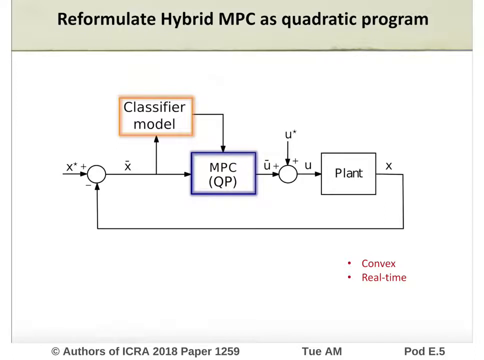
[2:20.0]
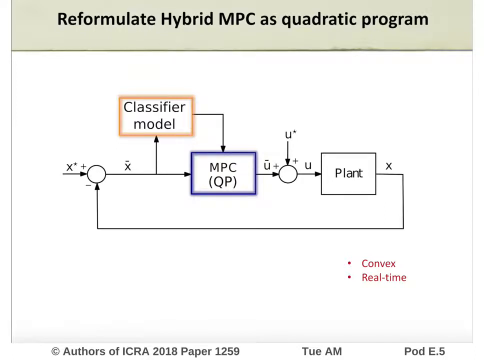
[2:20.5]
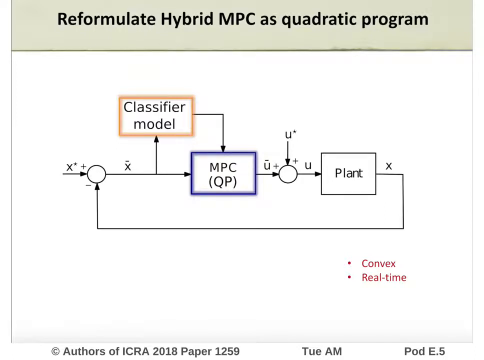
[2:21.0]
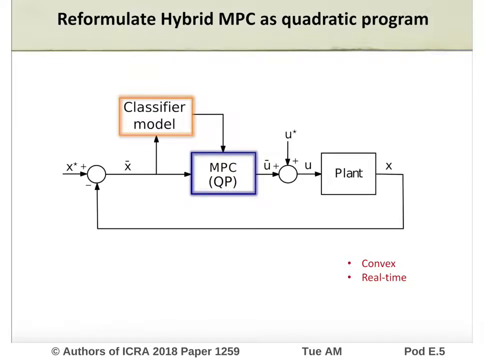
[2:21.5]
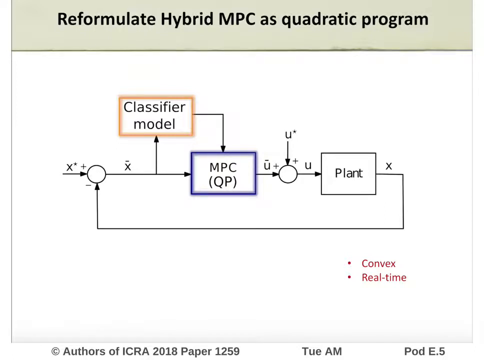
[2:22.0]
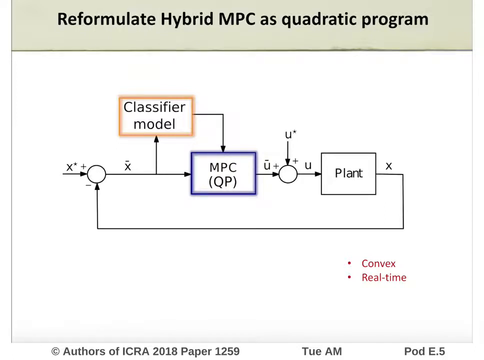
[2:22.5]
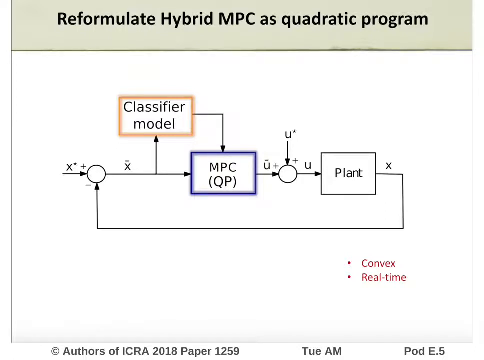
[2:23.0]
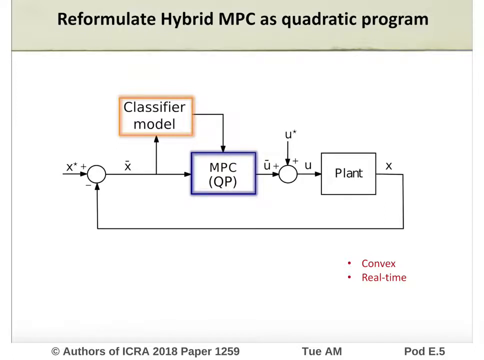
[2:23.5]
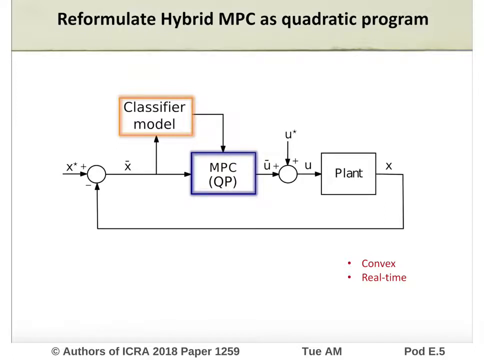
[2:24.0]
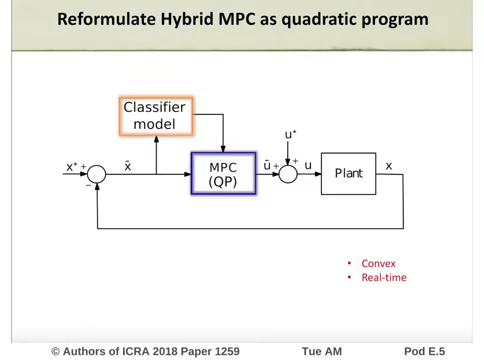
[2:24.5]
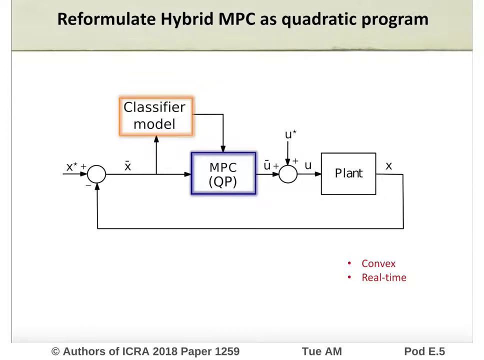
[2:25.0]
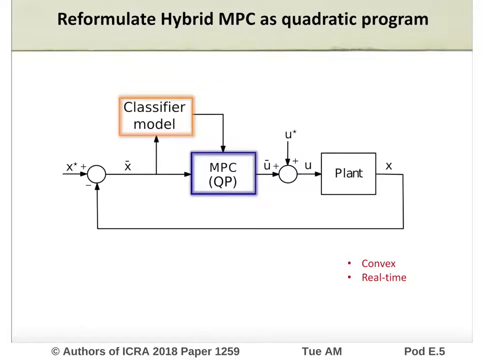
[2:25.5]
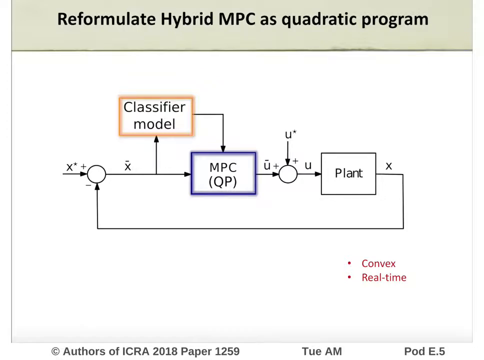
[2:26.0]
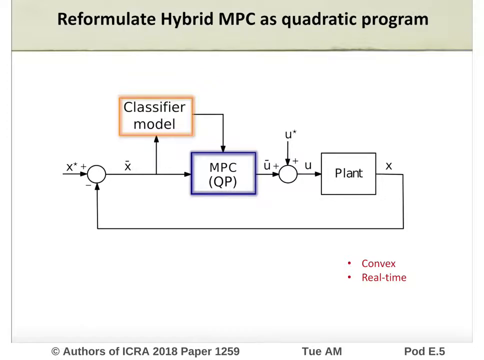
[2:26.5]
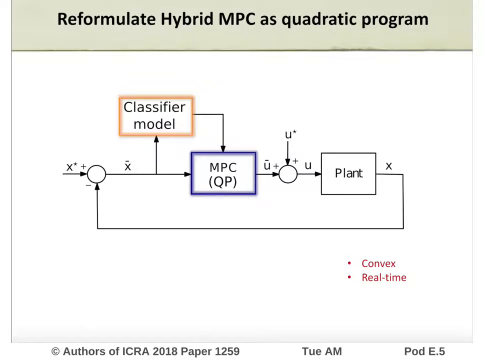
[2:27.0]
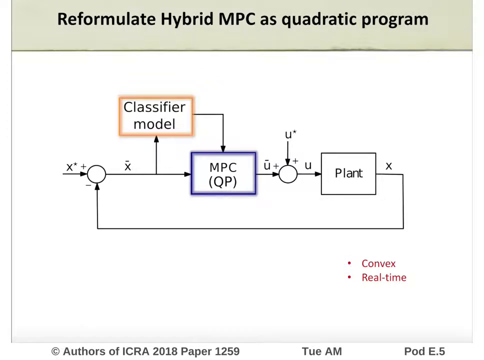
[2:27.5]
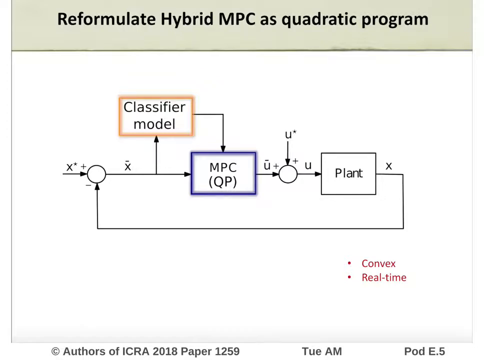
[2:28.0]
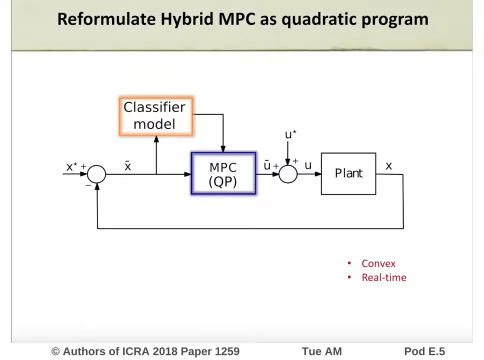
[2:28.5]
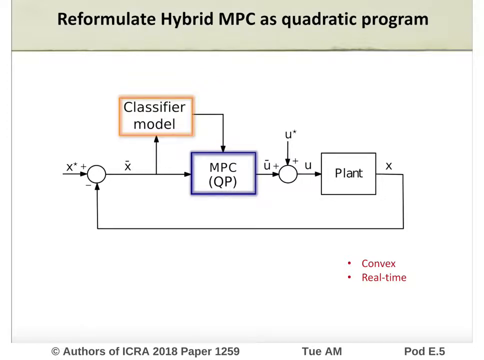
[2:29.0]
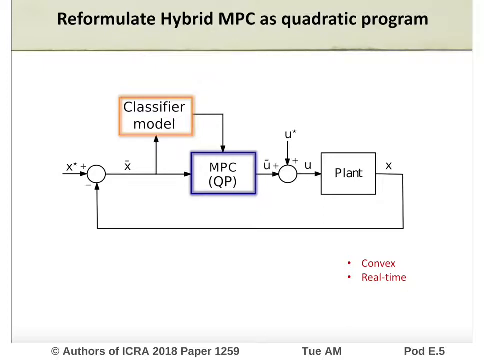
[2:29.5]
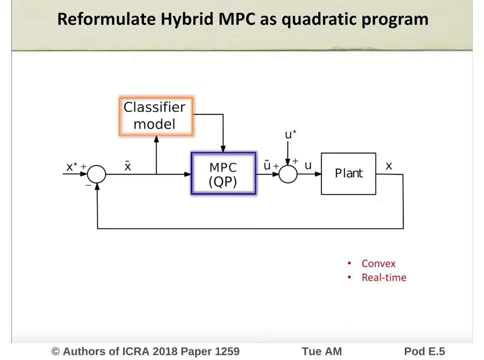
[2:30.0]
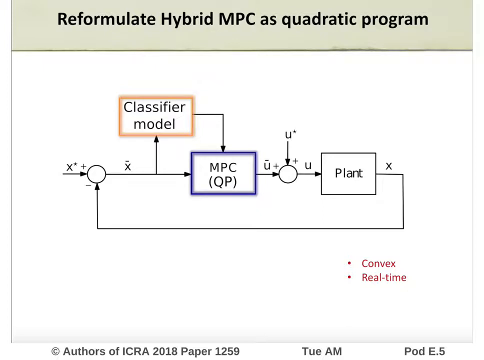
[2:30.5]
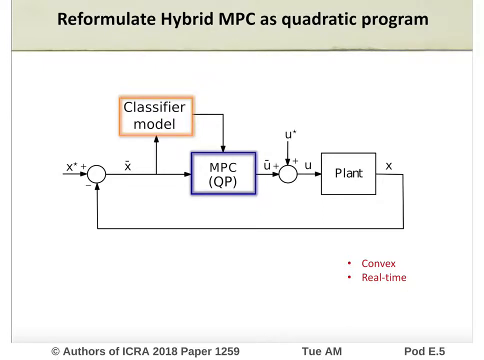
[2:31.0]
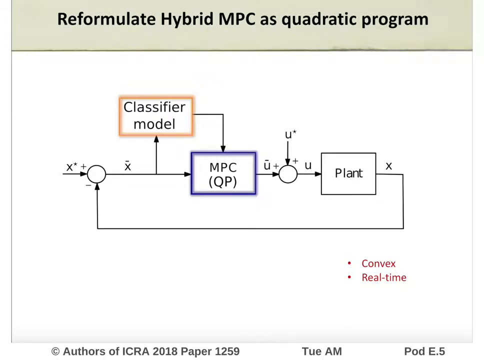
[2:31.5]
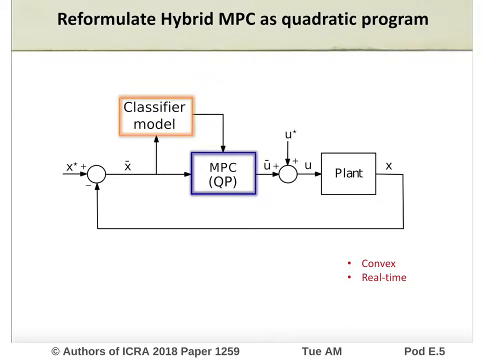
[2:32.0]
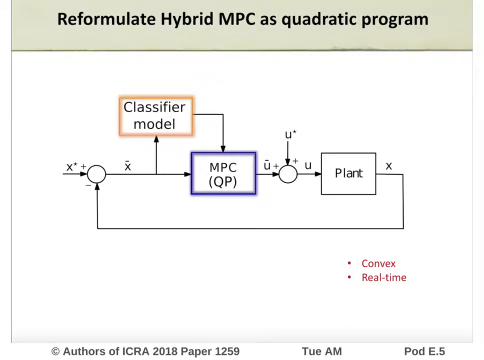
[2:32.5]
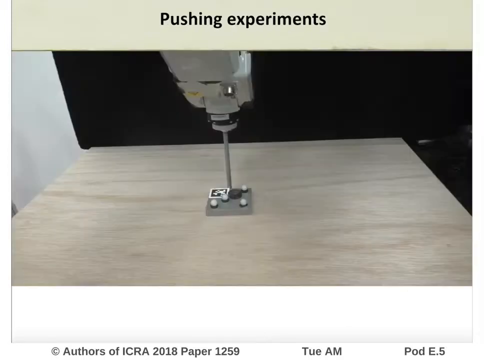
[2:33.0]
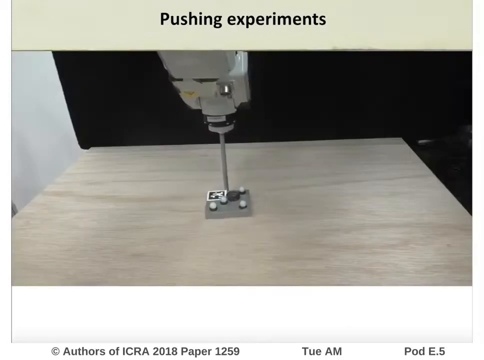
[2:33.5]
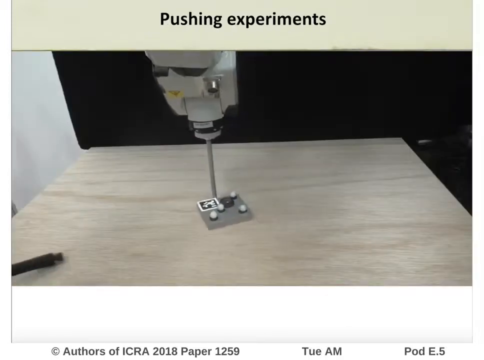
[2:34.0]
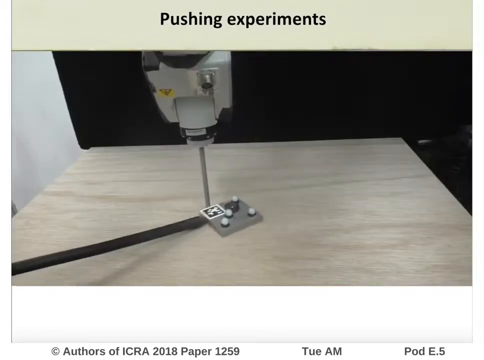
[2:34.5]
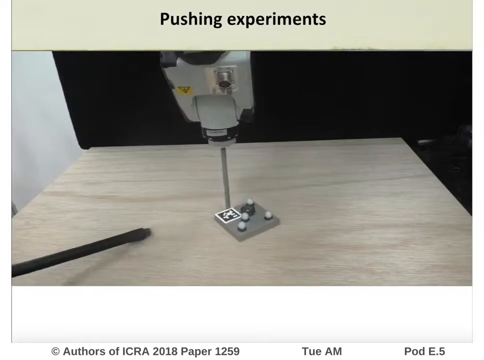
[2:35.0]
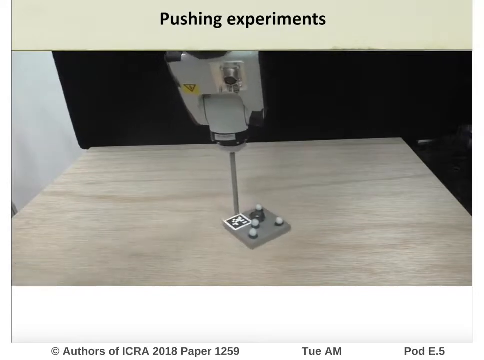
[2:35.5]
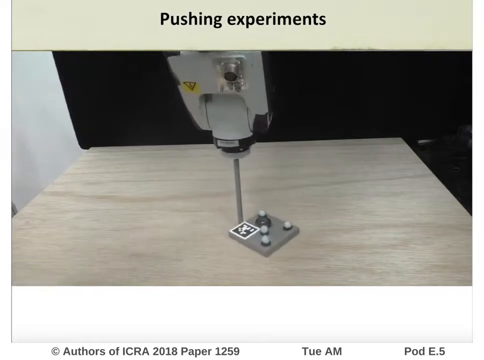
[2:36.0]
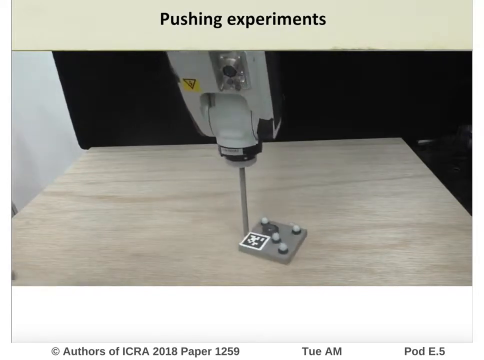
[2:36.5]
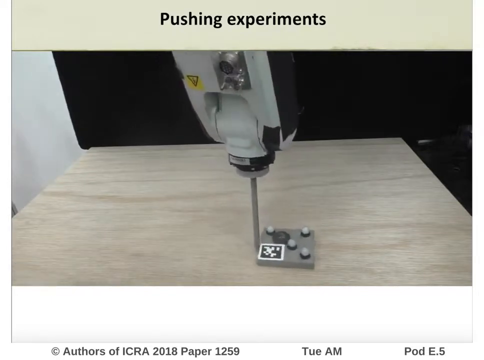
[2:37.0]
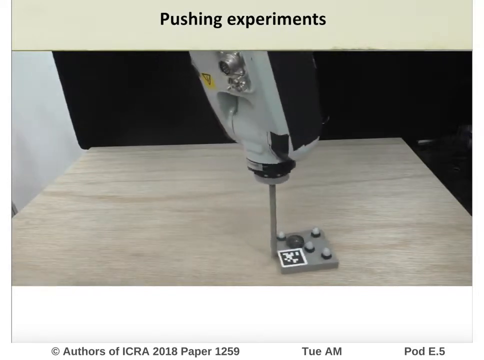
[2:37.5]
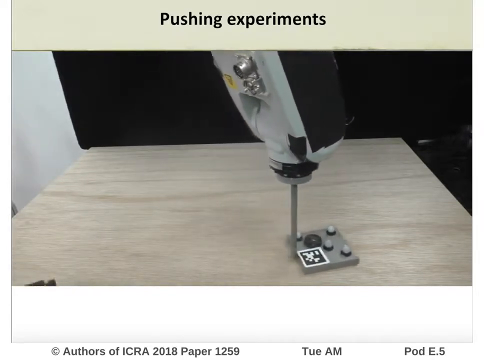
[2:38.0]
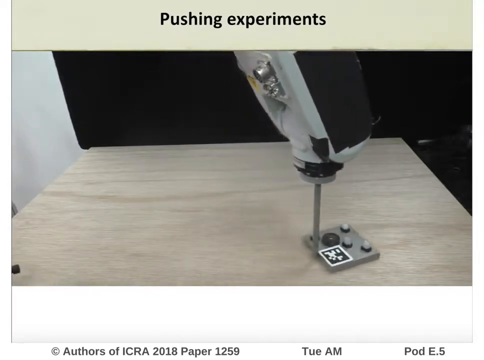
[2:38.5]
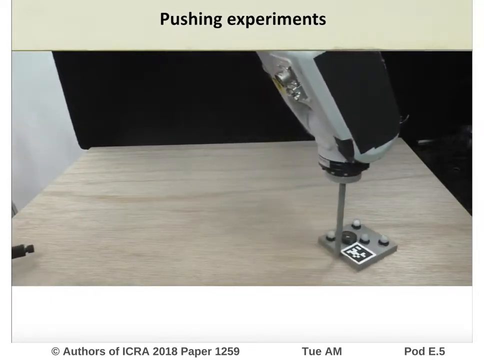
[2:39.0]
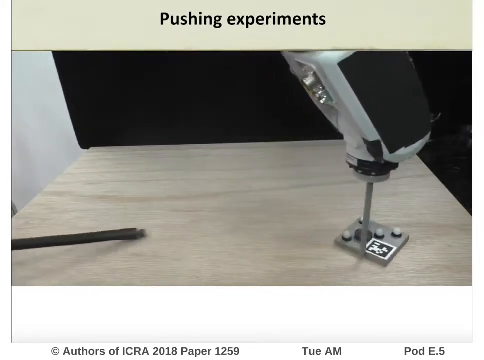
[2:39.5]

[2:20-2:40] A formula diagram with arrows is shown: an arrow goes to the right, then up to "classifier model" and back down, or straight to the MPC. Another dot leads to the u terms: a u with a line over it, plus a u with a star next to it, plus a regular u. Then there is a rectangle with the word "plant" inside it, with the X outside of it, and an almost rectangular arrow that runs all the way back toward the beginning. Then pushing experiments are shown, either in slow motion or just slowly: the machine pushes the item around while something tries to get to it. The video goes back to the formula, and then someone's hand is on a stick, pushing it toward the item from the machine, trying to stop what the machine is doing.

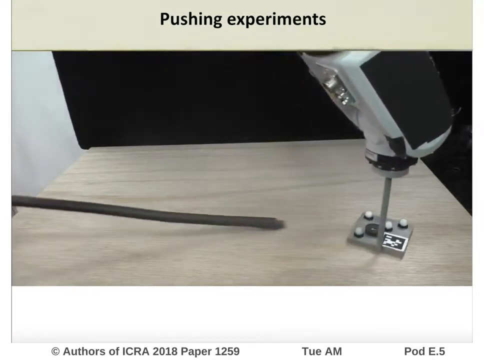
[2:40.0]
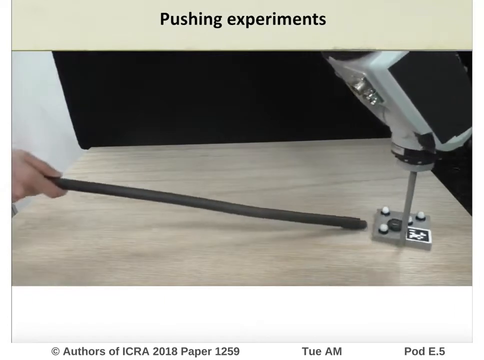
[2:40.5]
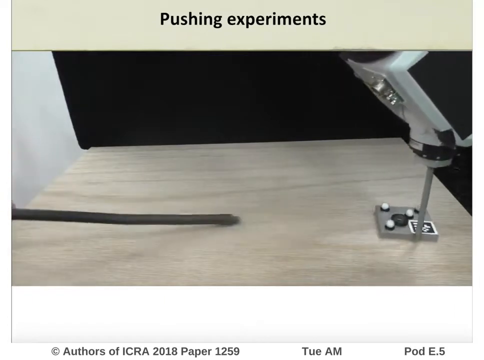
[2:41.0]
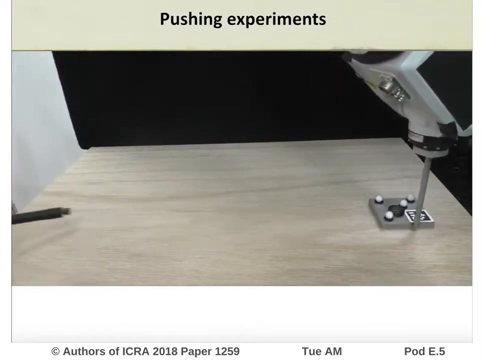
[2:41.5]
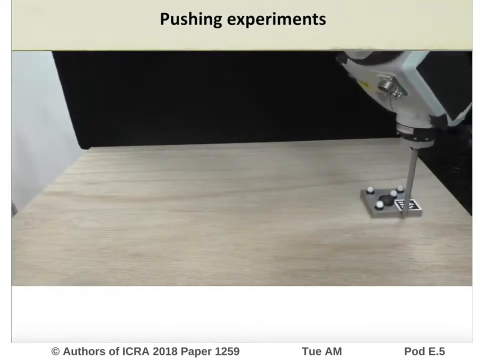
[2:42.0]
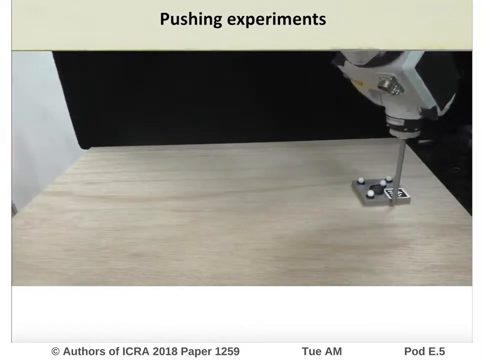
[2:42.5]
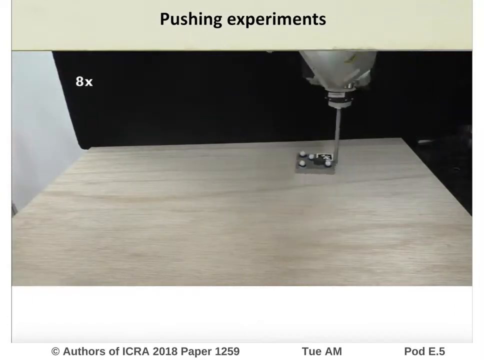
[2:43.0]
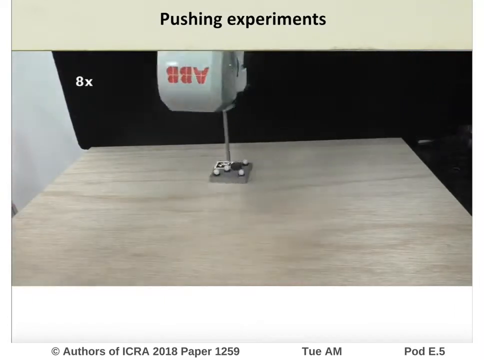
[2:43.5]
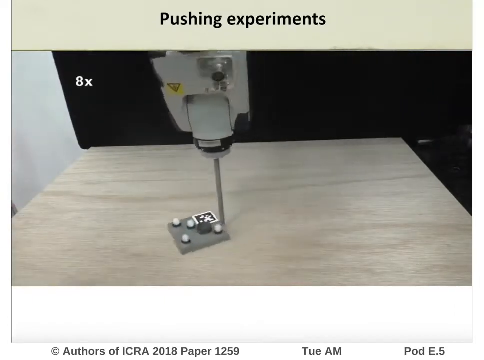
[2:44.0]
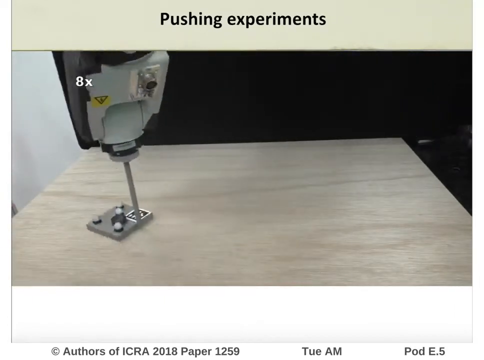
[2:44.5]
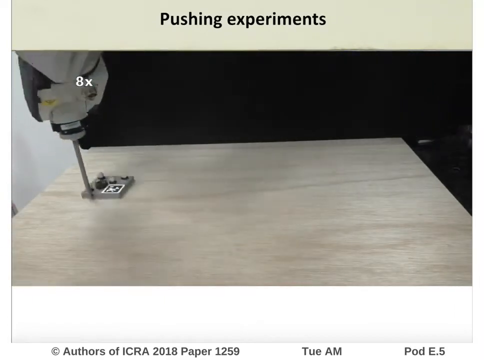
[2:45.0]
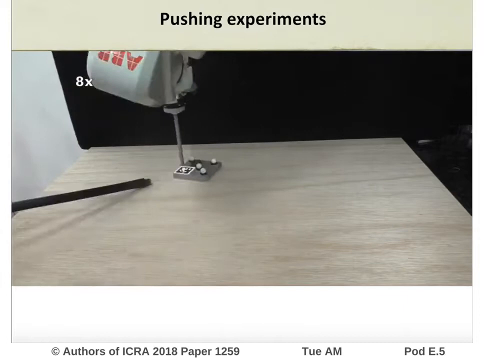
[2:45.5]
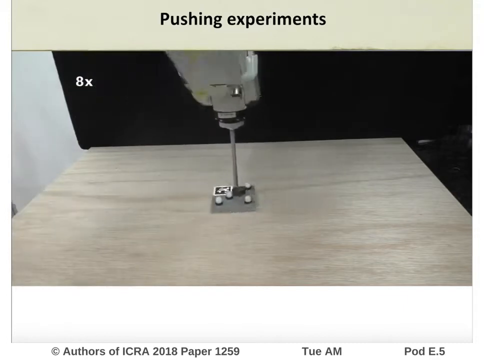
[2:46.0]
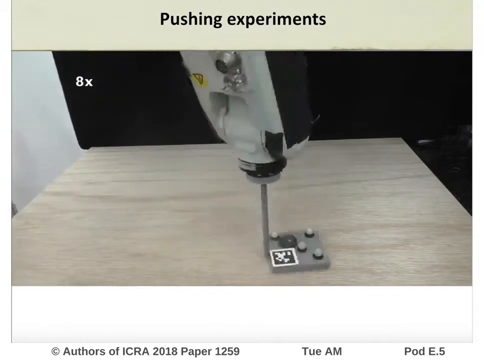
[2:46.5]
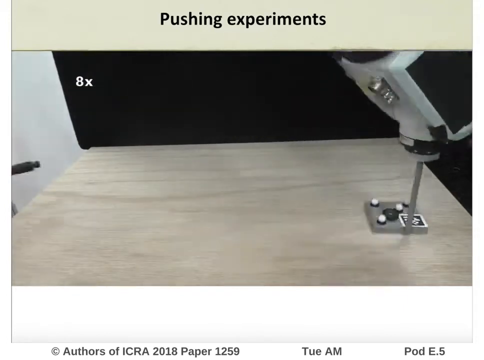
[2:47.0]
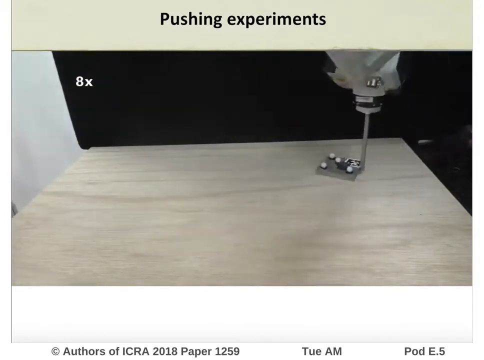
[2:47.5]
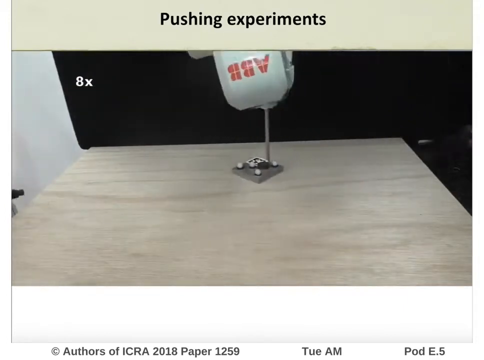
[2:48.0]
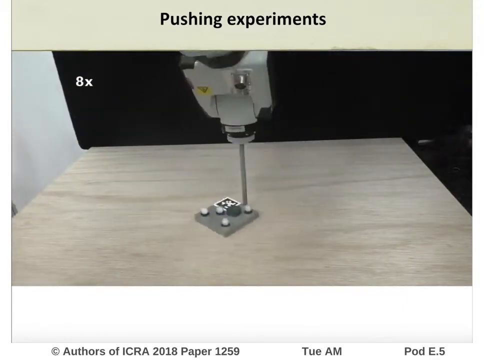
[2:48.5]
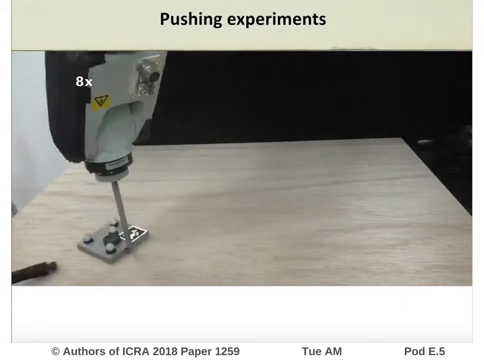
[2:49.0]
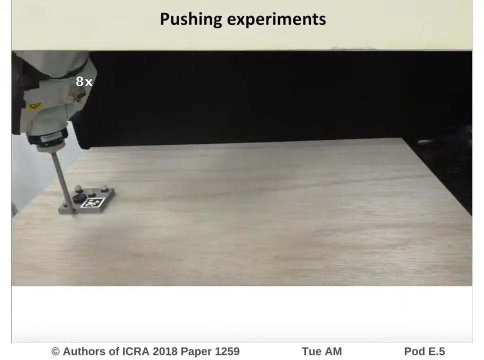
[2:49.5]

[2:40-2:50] The robotic arm has what looks like a metal straw at the bottom, not a drill but like a straw, and it pushes an object that is kind of a rectangular piece of metal with four ball-like dots on it and a black, kind of button-like thing. In one corner there appears to be a tiny rectangle on it with what kind of looks like an image of a computer dog, or maybe a QR code. The robotic arm pushes the object around on a piece of board, while a person with a stick apparently tries to stop it. The footage is sped up to eight times, and it is almost like keep away, with the arm keeping the small rectangular object away from the person. Then it slows down and speeds back up to eight times.